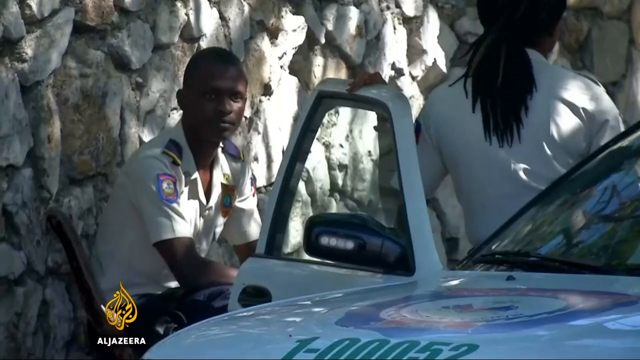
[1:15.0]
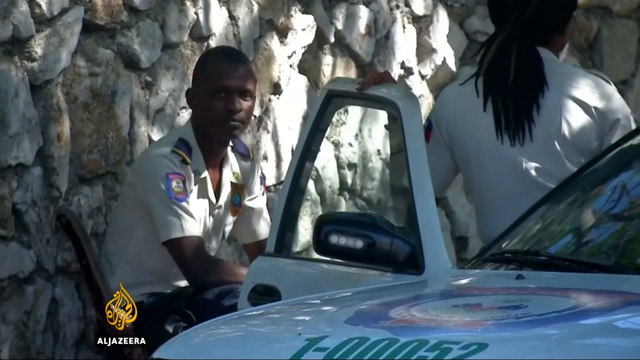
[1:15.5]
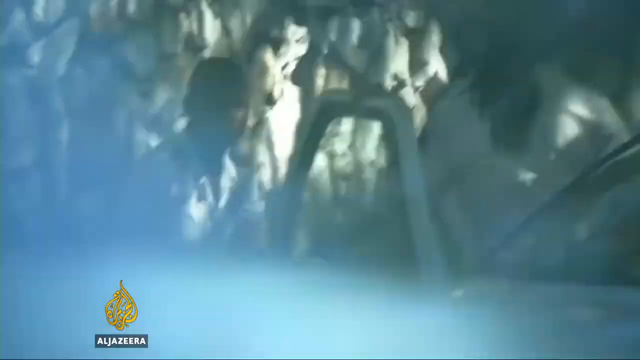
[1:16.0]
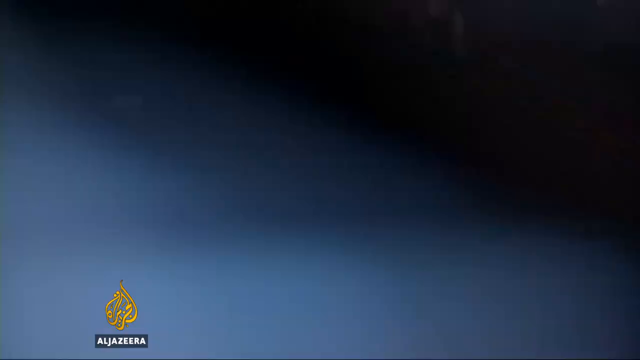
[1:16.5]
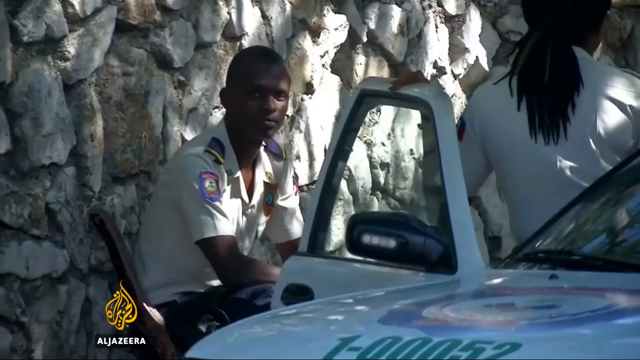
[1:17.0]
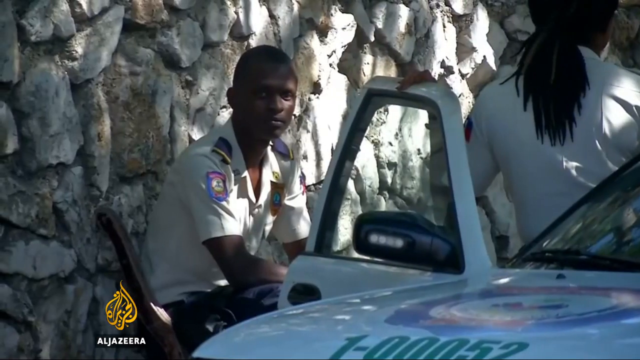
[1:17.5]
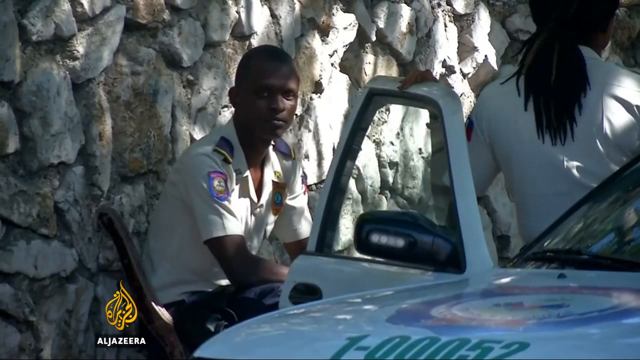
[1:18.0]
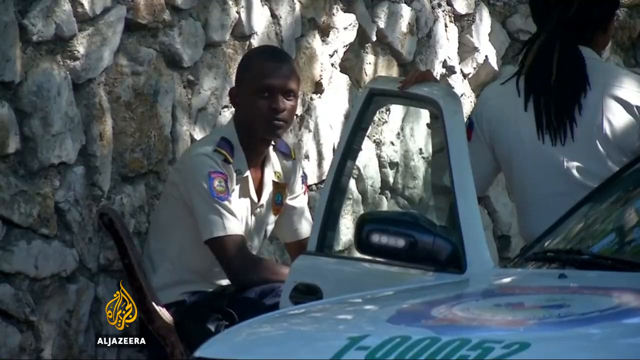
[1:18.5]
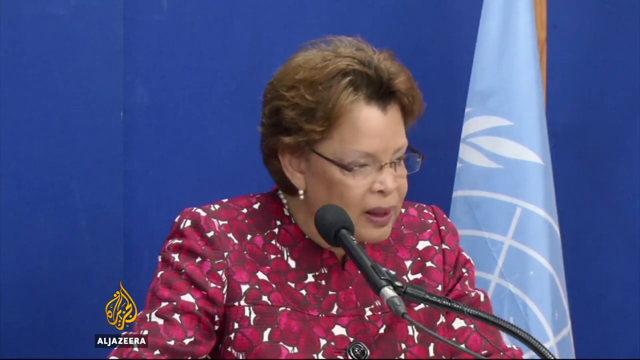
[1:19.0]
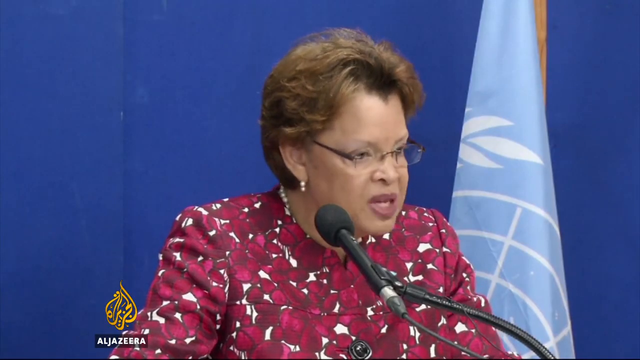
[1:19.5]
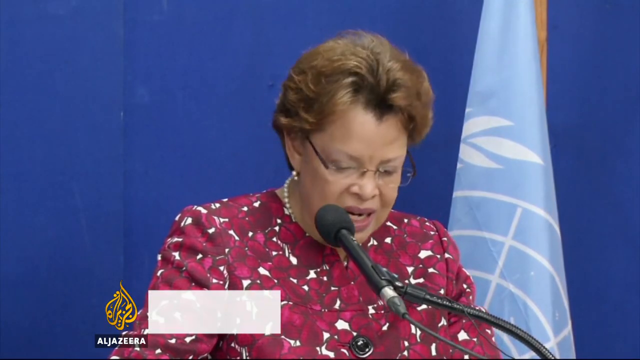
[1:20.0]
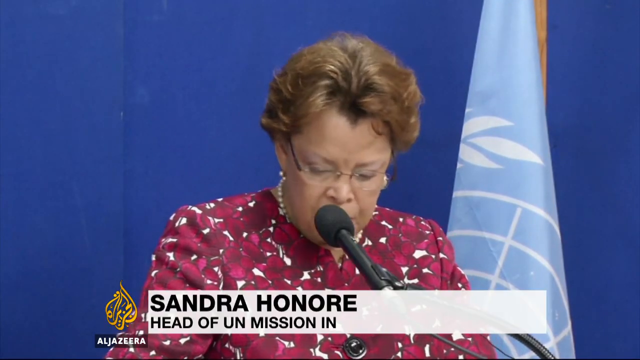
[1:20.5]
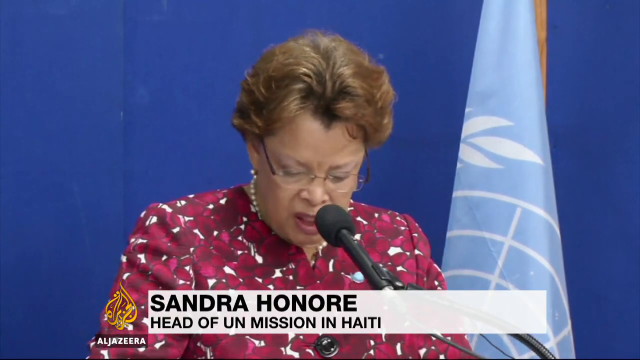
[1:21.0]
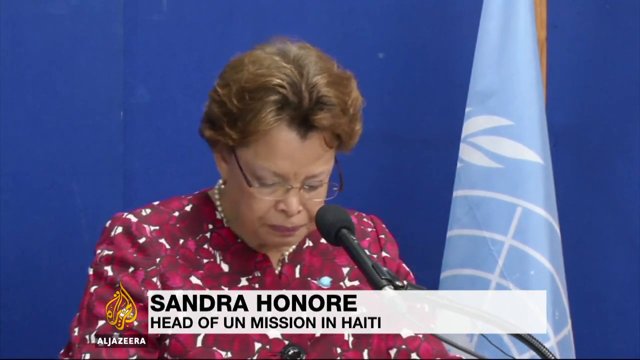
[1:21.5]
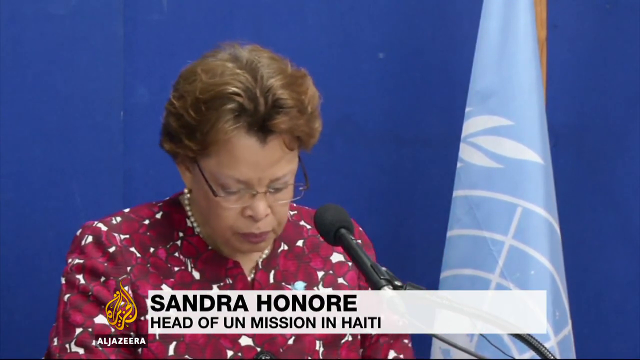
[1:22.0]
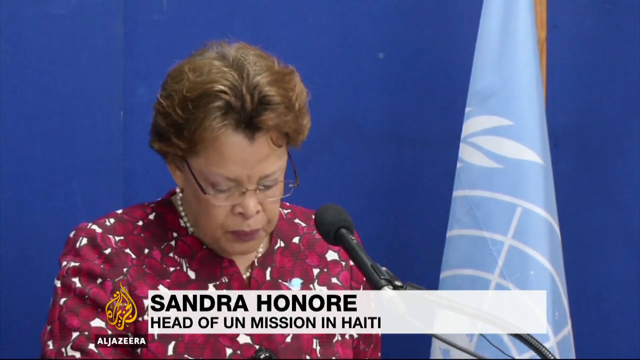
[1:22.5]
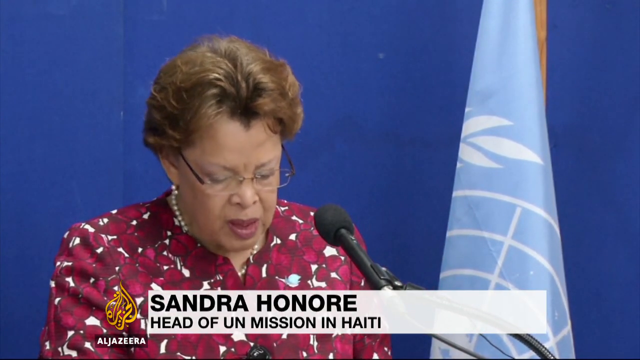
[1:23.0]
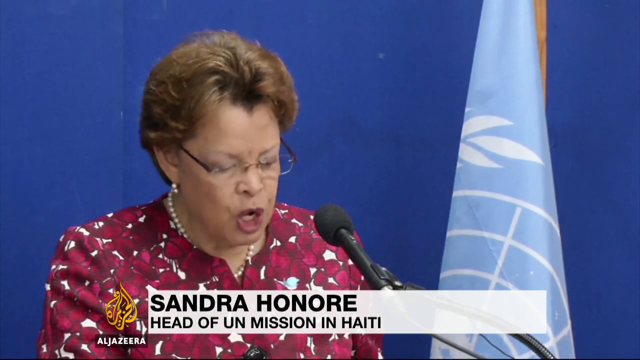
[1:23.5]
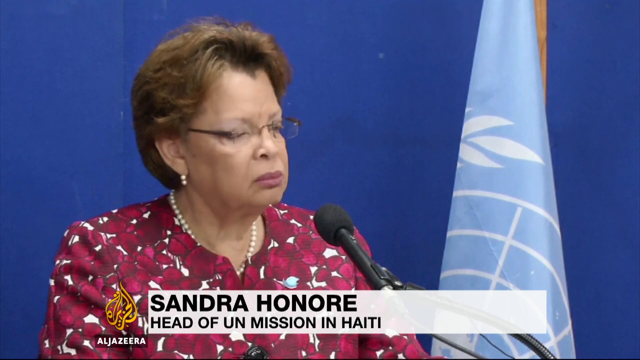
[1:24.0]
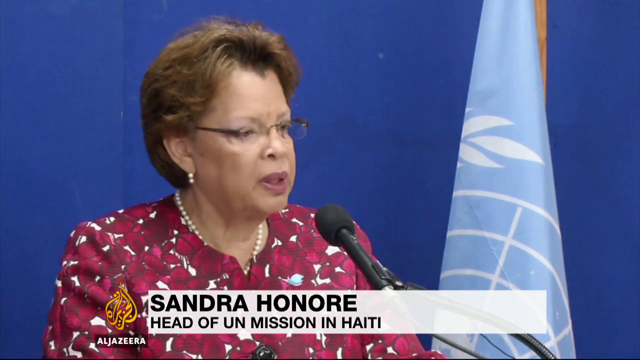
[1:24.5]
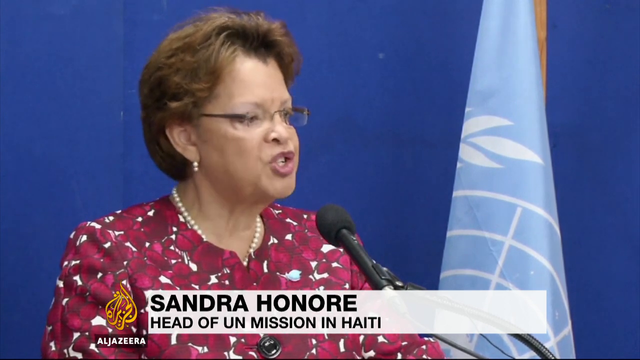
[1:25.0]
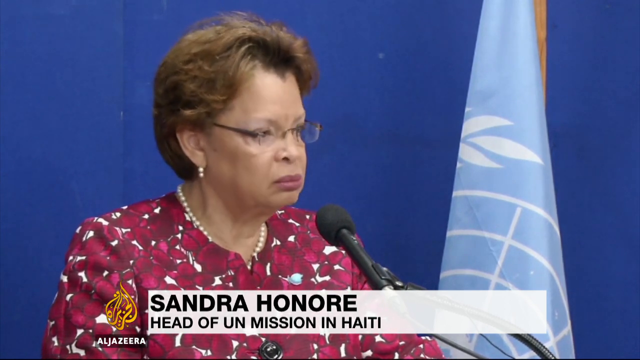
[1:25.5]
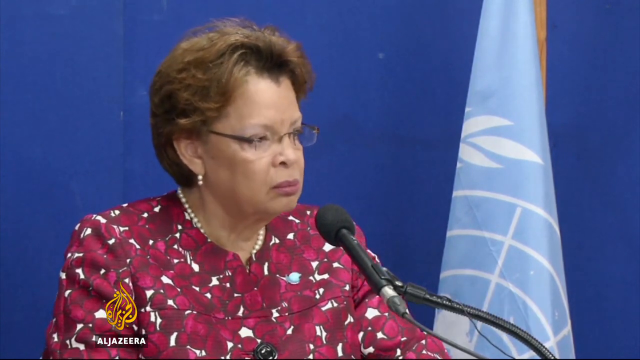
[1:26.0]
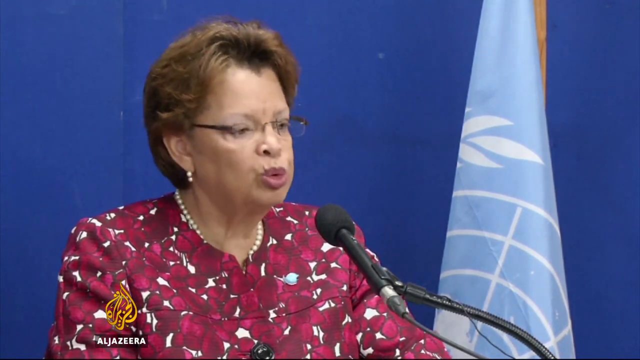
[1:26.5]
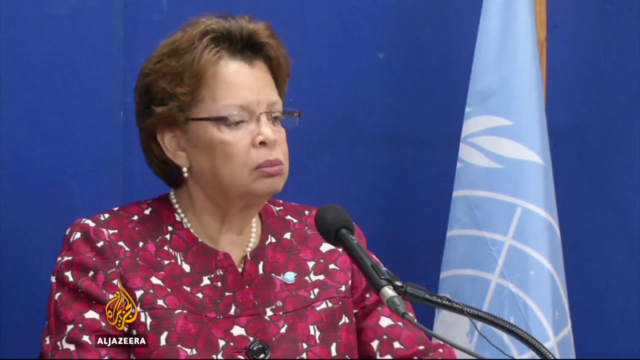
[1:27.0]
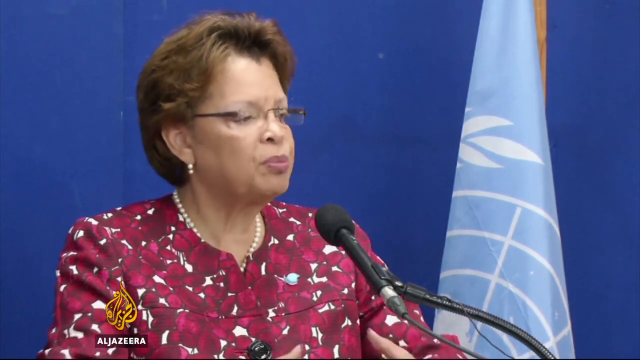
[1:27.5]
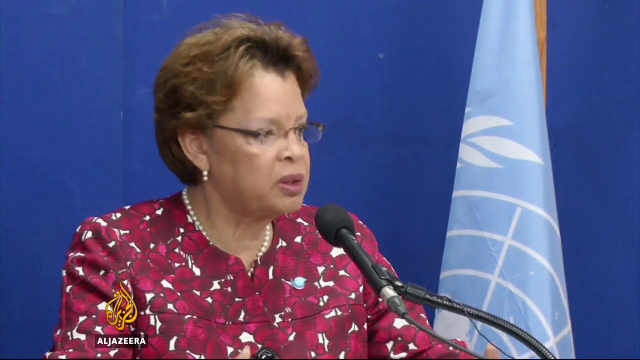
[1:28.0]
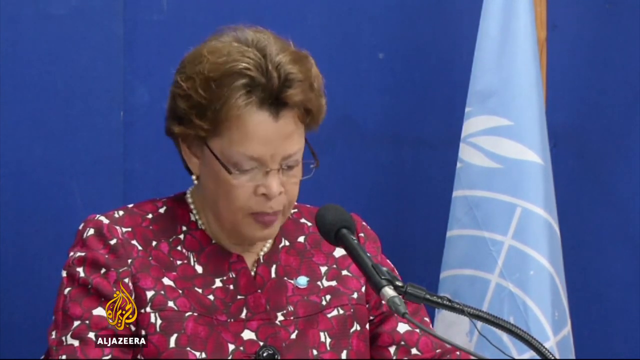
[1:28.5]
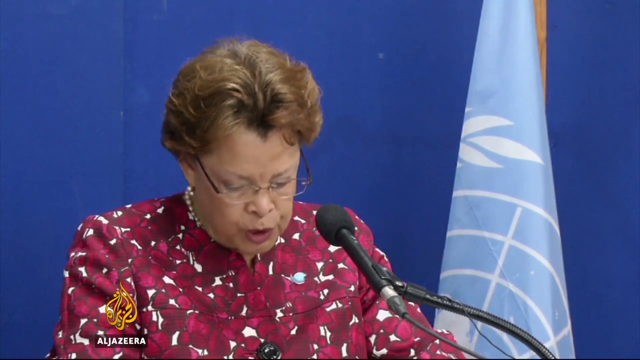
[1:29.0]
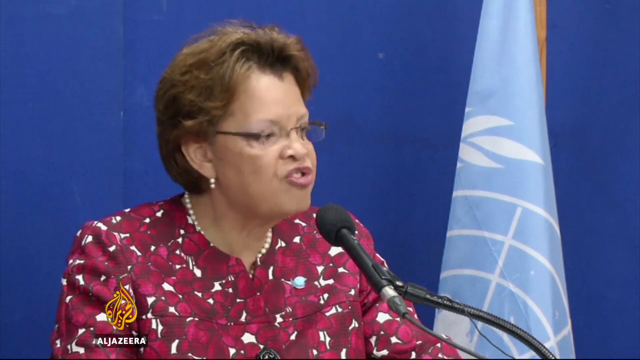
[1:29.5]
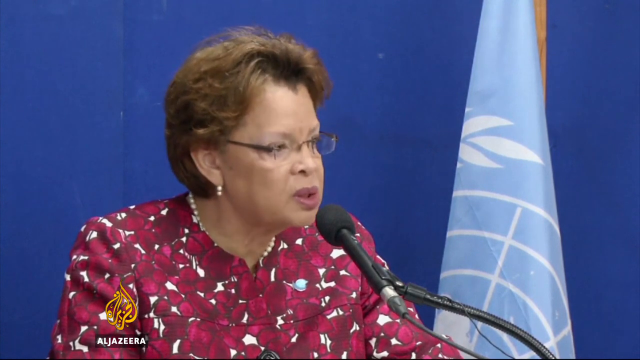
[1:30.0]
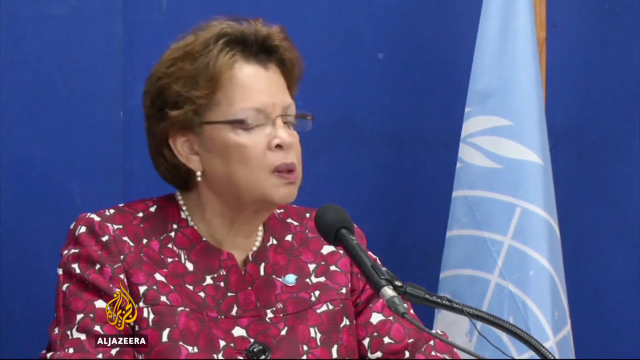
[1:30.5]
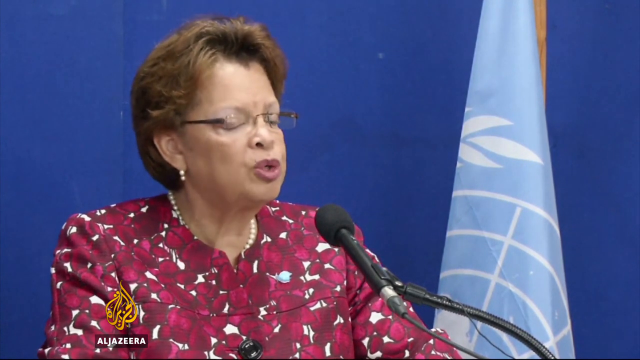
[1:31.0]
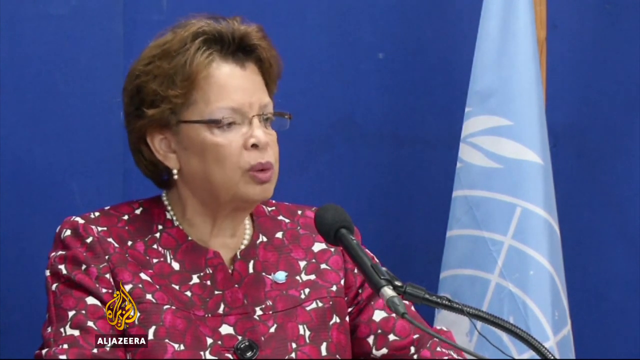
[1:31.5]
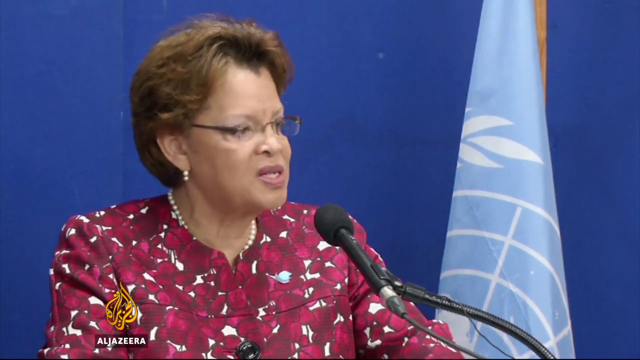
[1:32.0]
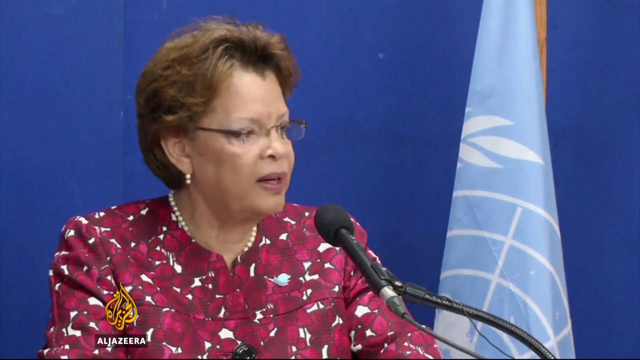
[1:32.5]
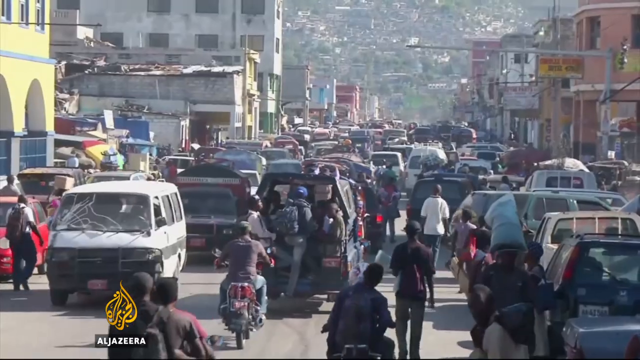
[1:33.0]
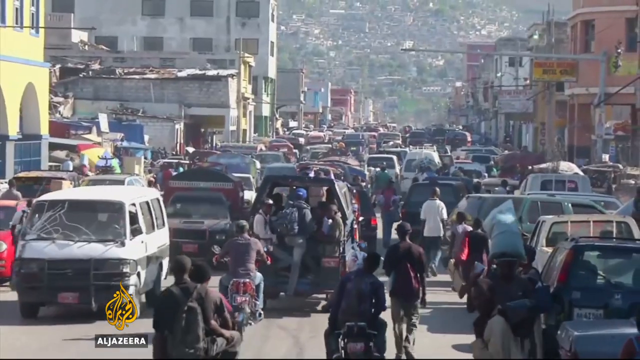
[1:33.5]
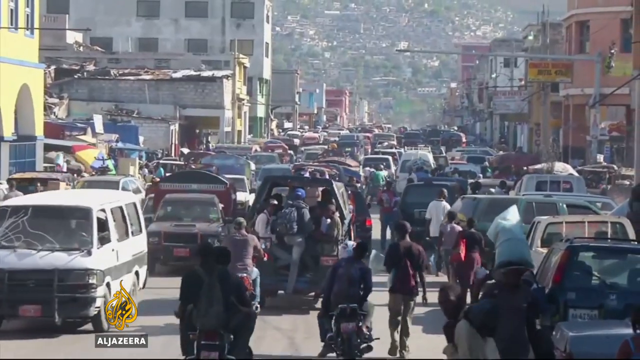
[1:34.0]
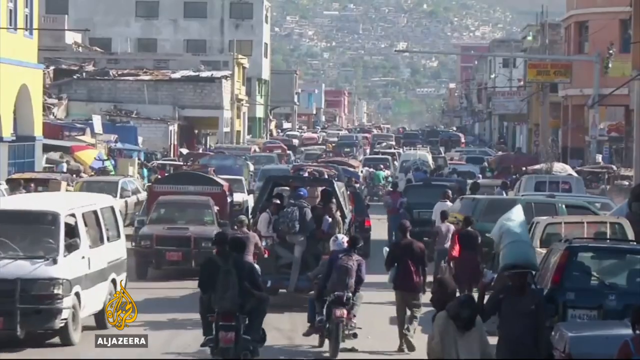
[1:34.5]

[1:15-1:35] The head of the UN mission in Haiti, Sandra Honore, speaks at a podium. She wears a maroon printed dress, looks very serious, and appears to be standing next to a flag. A crowded street scene shows vehicles and people moving both ways; it looks very dusty, cloudy or foggy in the bright sunshine, and houses are built into the side of a hill or mountain. The Al Jazeera logo is on the video.